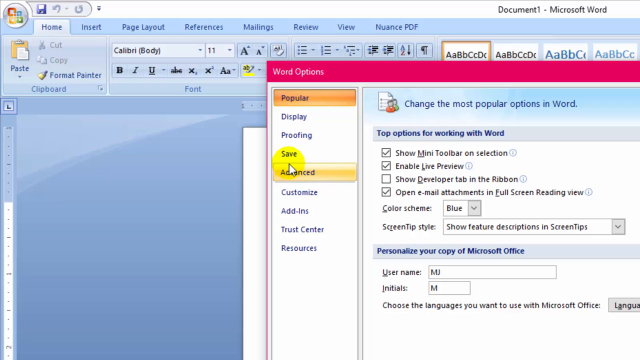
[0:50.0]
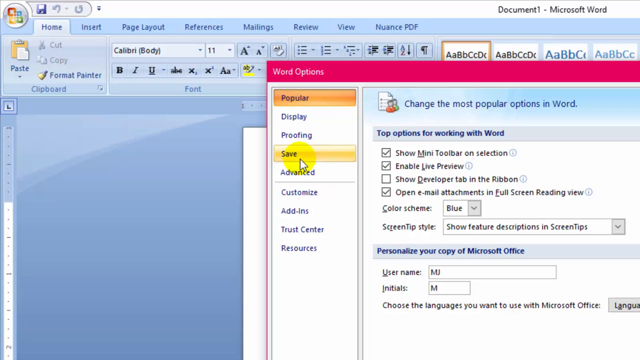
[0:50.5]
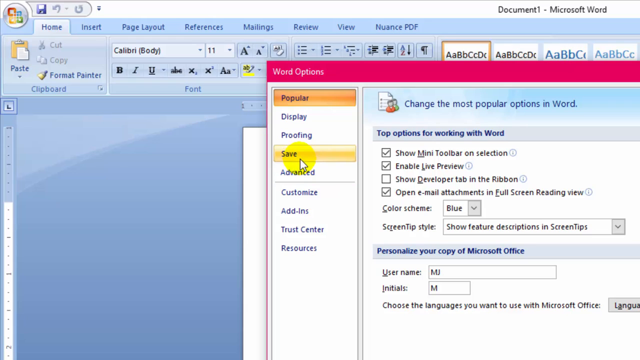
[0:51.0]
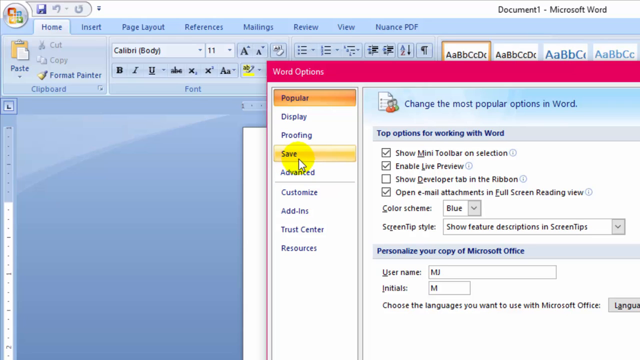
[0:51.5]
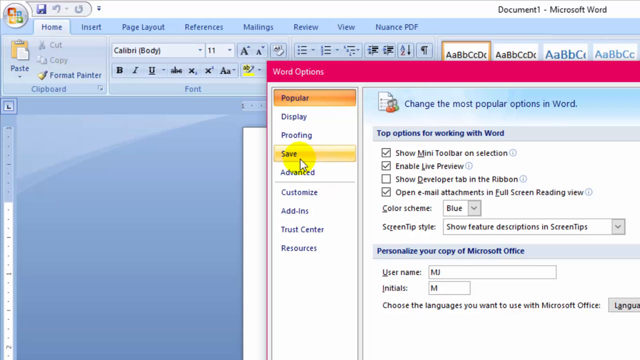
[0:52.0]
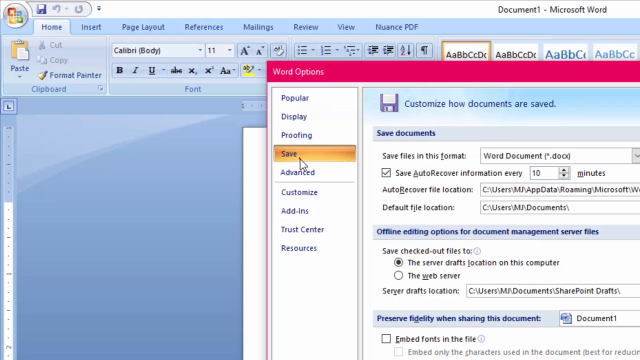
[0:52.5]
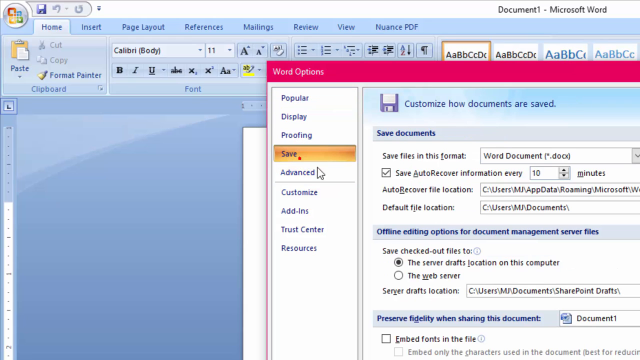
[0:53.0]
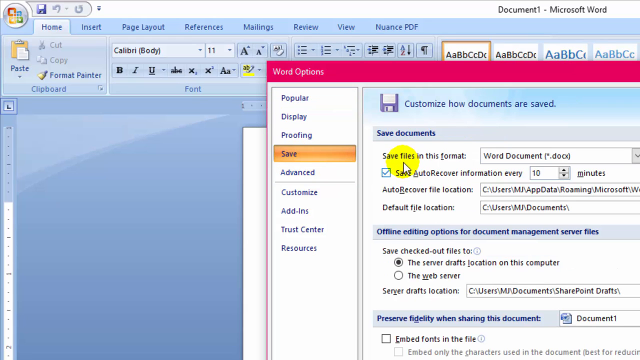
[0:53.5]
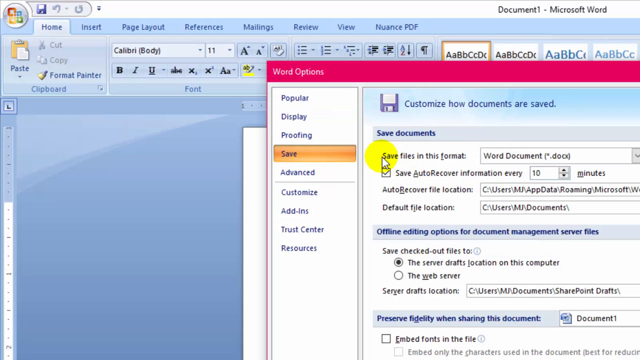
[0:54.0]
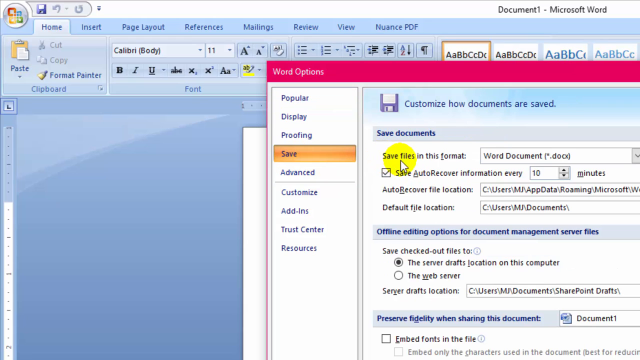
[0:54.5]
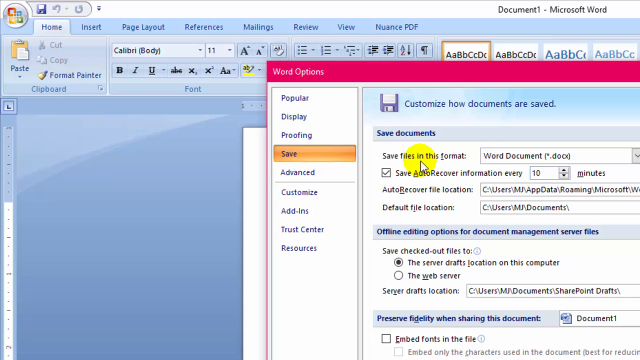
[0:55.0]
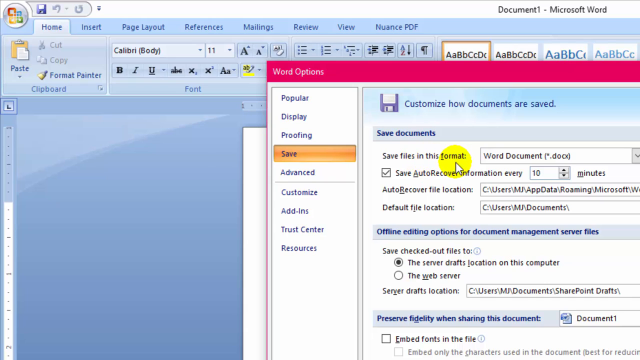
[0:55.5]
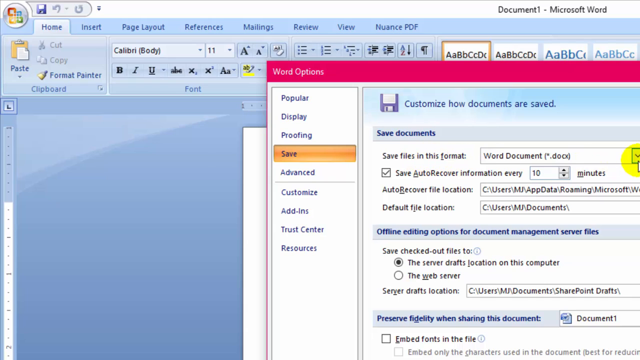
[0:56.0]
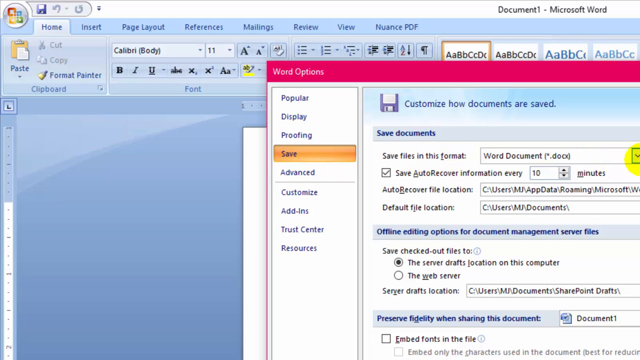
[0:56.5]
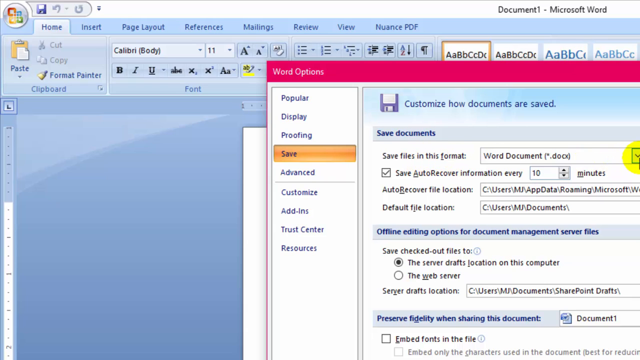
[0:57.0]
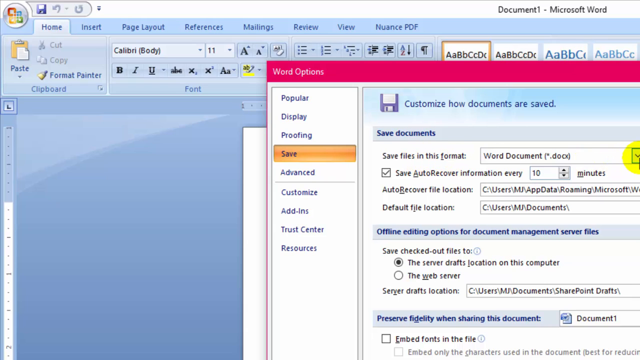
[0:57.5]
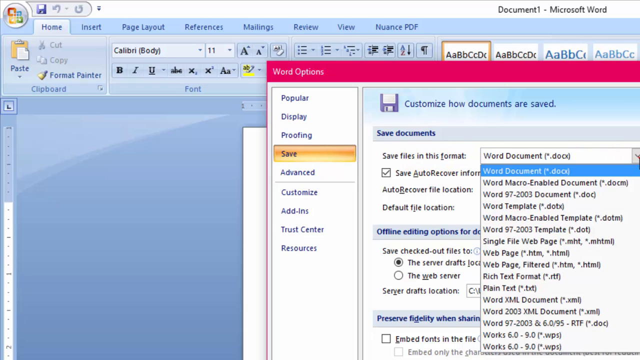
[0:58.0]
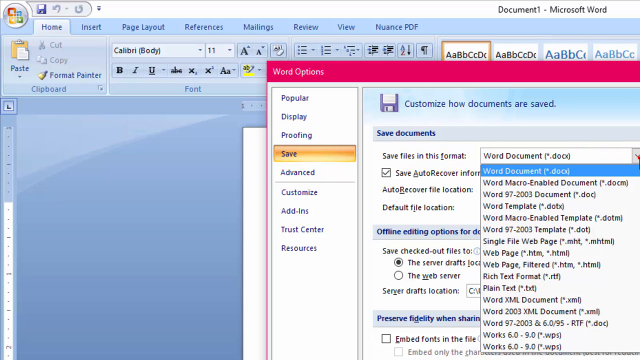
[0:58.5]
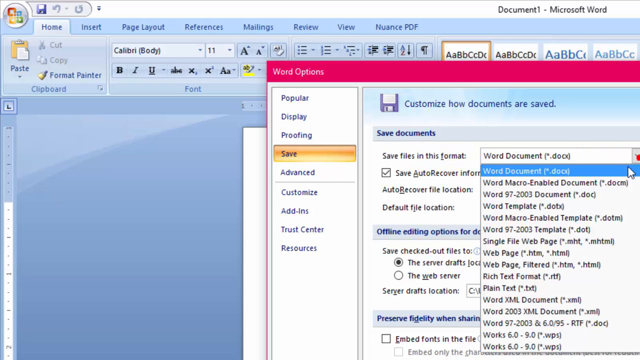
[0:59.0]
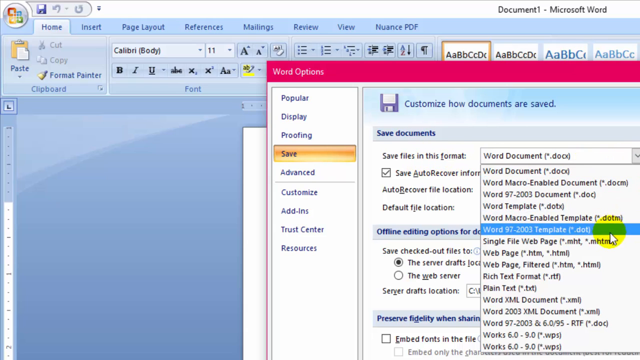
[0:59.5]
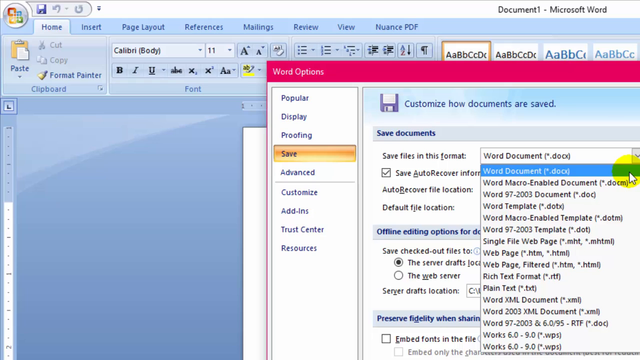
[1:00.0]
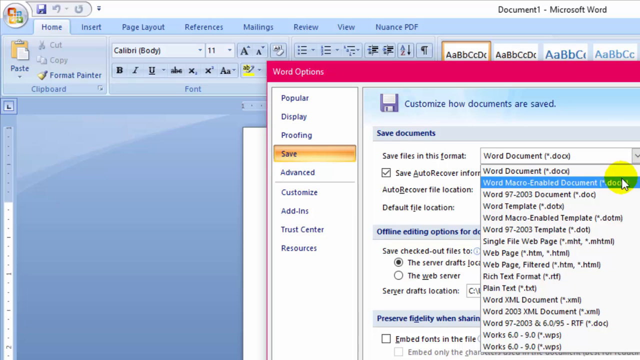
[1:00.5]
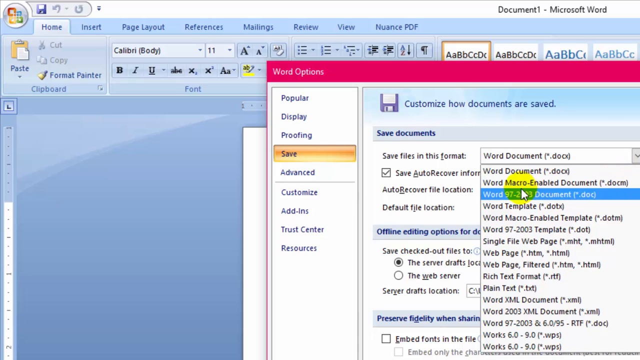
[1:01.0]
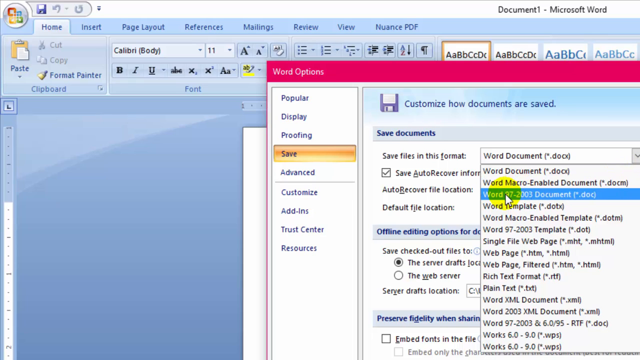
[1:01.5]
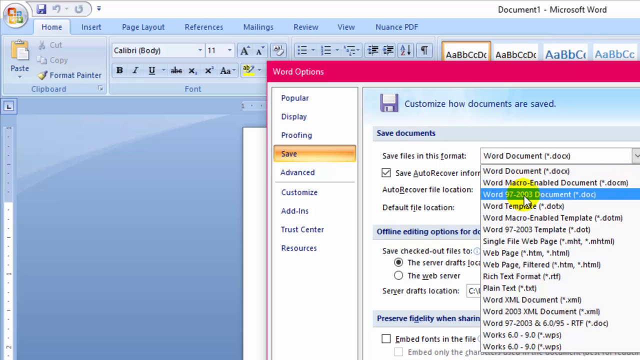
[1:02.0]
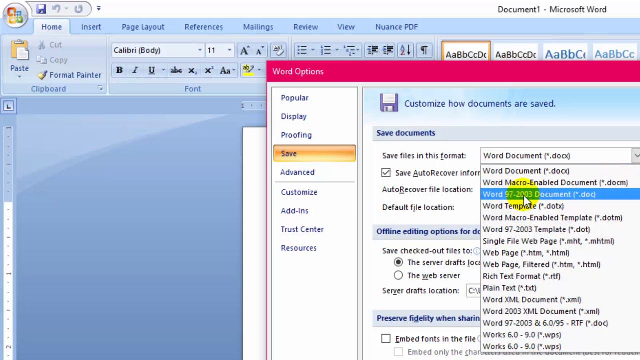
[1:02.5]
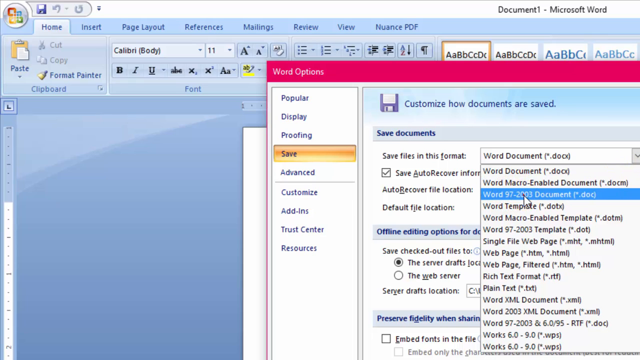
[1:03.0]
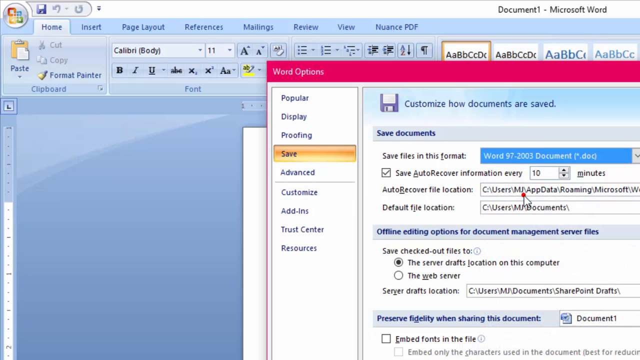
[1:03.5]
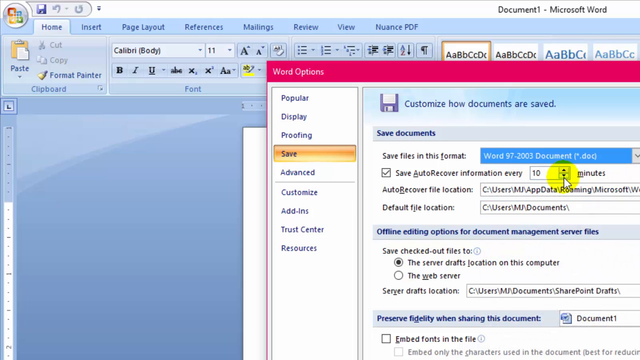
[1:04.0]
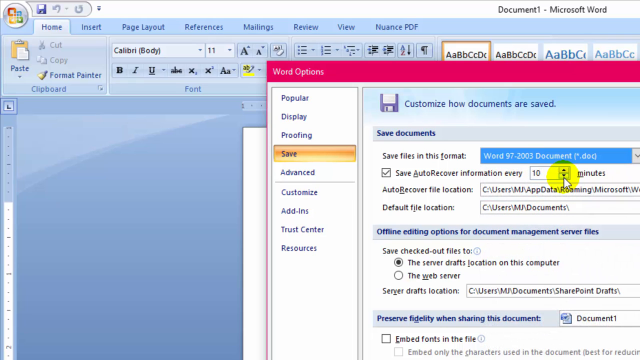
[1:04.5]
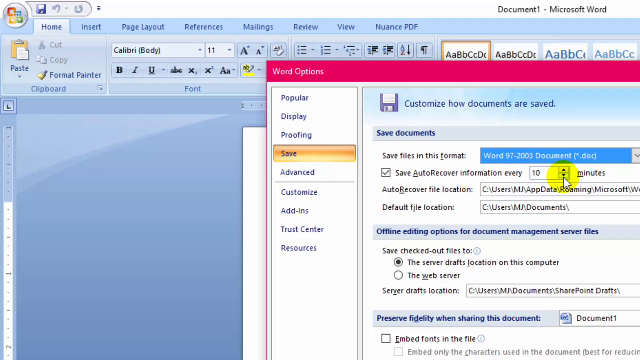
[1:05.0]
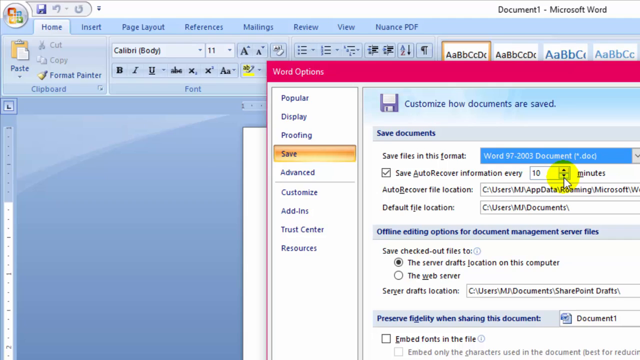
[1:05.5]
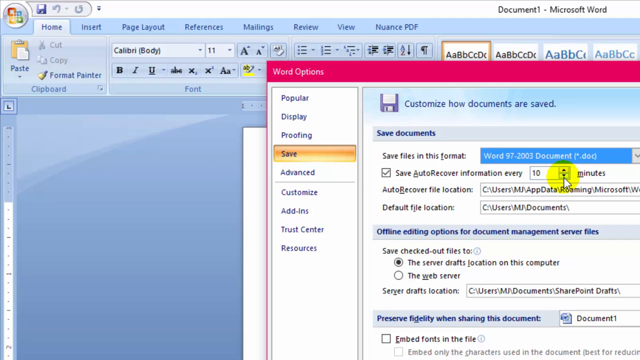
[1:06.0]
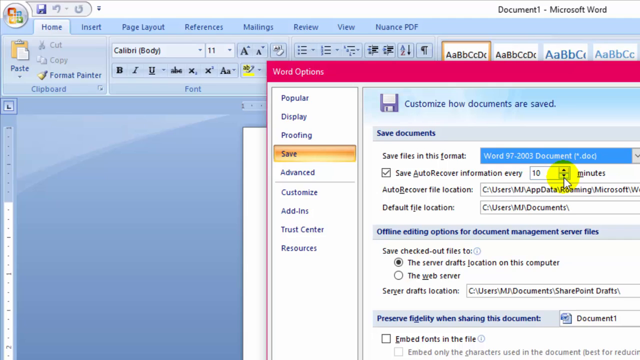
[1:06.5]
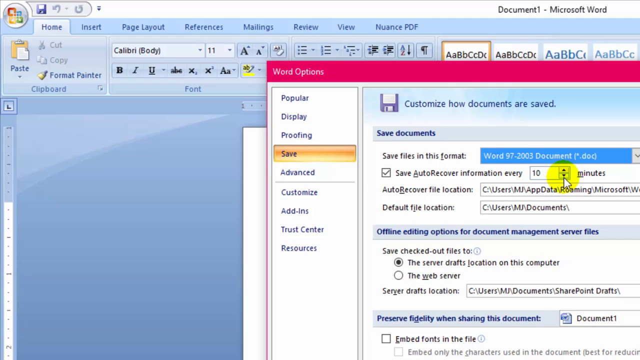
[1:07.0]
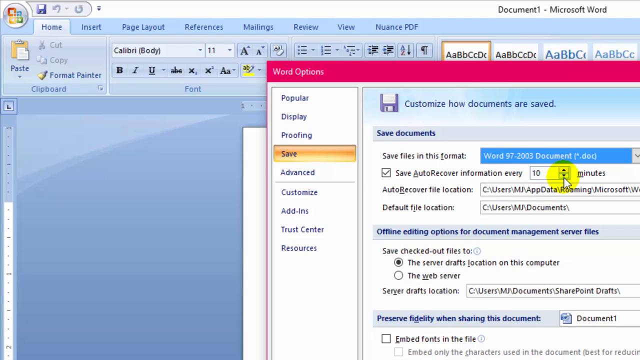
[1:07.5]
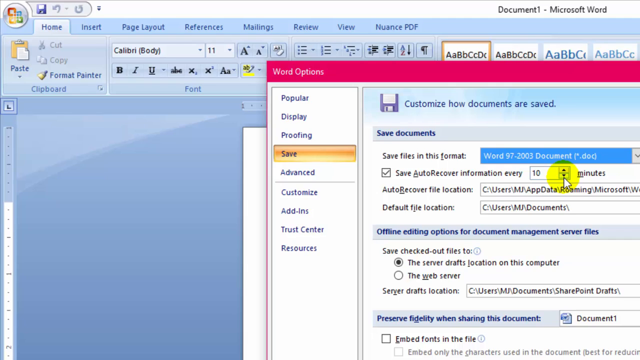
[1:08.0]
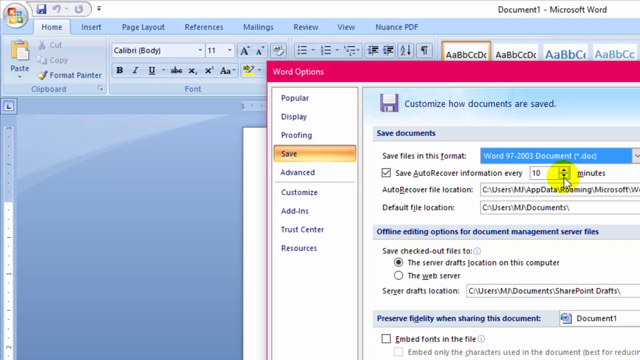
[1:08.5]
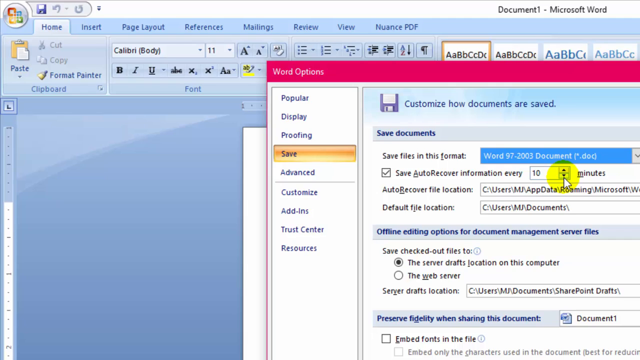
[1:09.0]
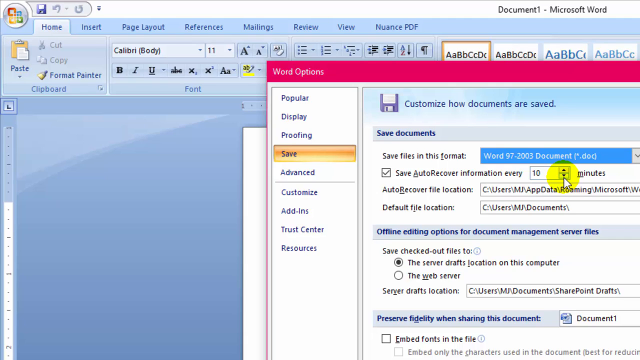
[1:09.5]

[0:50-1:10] The new window is called "Word Options" and lists options including Popular, Display, Proofing, Save, Advanced, Customize, Add-ins, Trust Center and Resources. The user clicks the Save option, highlights part of it, and goes to the "Save files in this format" option. Clicking a small arrow opens a list of many formats, including Word Macro-Enabled Document, Word Template, Word Macro-Enabled Template, Single File Web, Web Page, Plain Text, Word XML and others. The user clicks Word 97-2003 Document. The cursor then seems about to click another option about saving auto-recover information, but it appears only to be highlighting it.